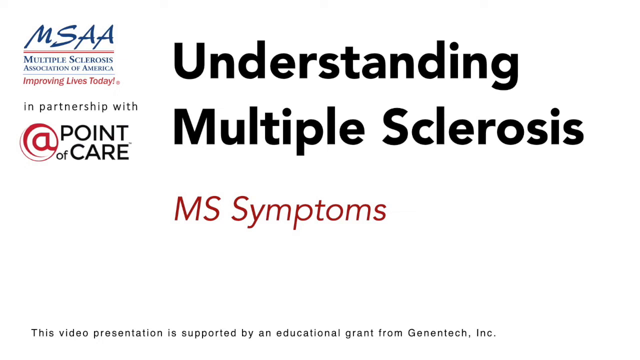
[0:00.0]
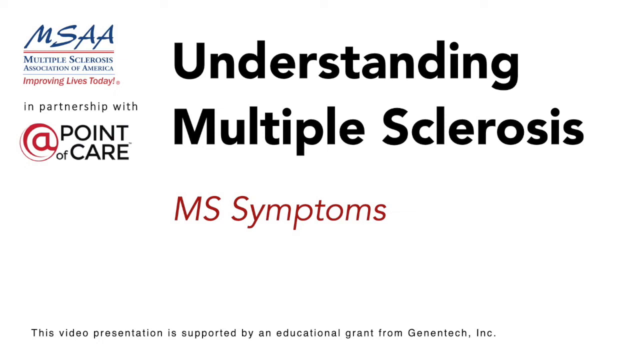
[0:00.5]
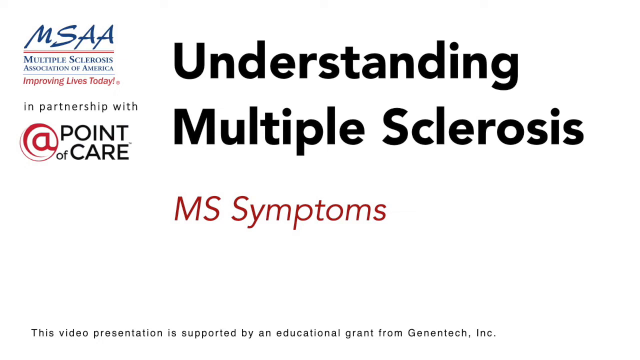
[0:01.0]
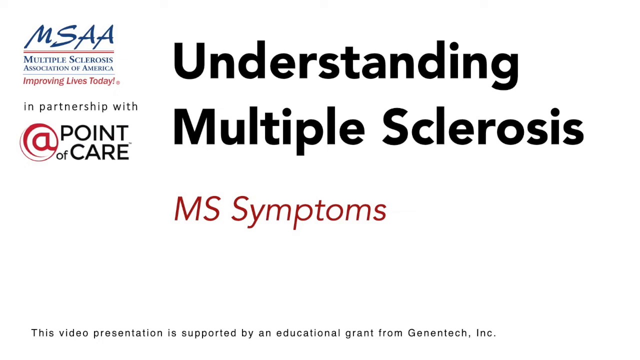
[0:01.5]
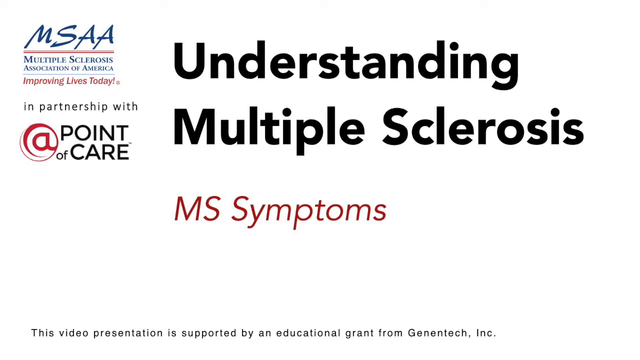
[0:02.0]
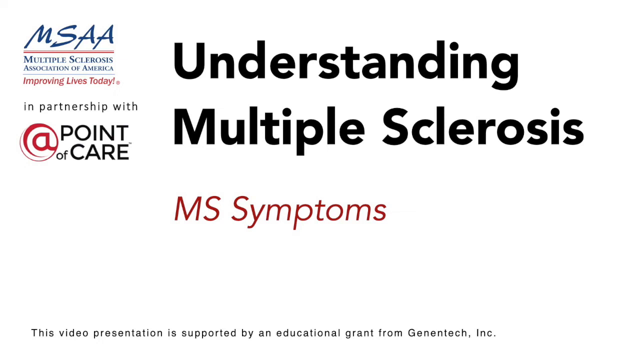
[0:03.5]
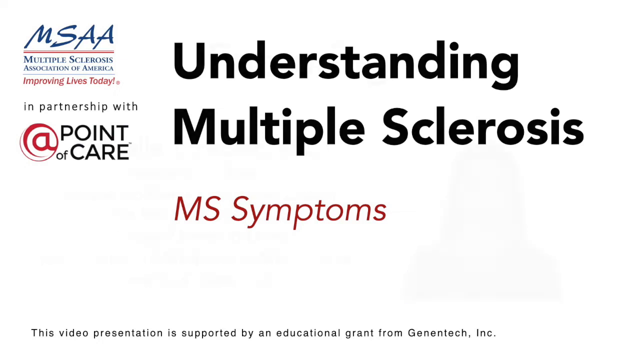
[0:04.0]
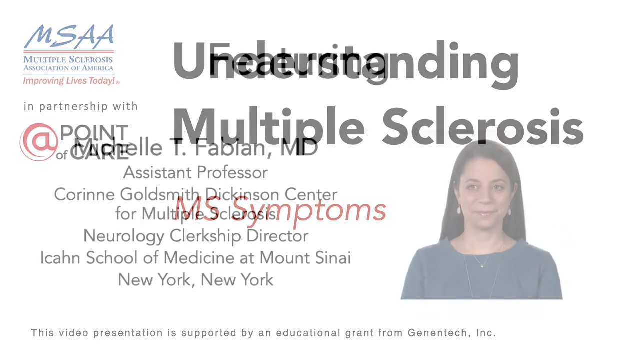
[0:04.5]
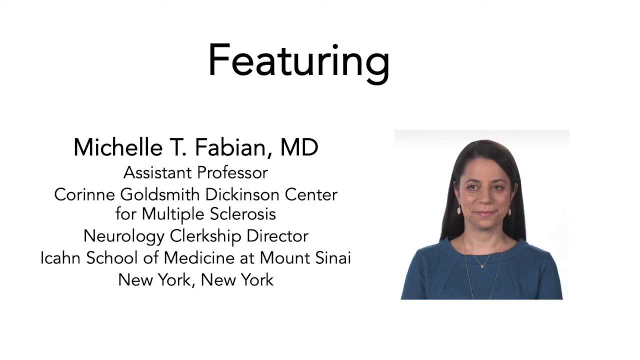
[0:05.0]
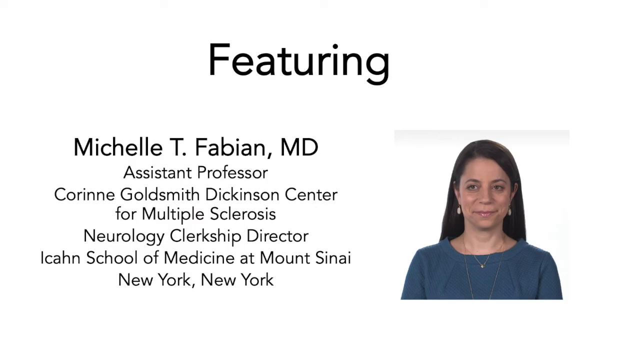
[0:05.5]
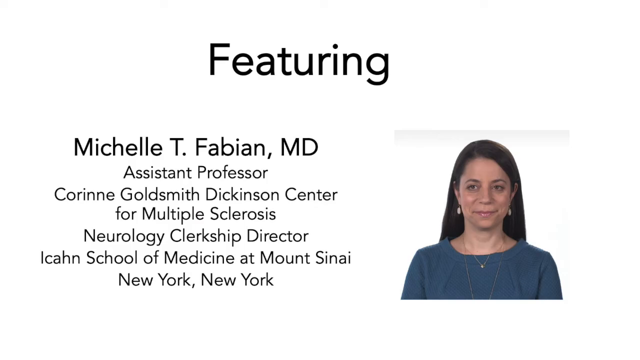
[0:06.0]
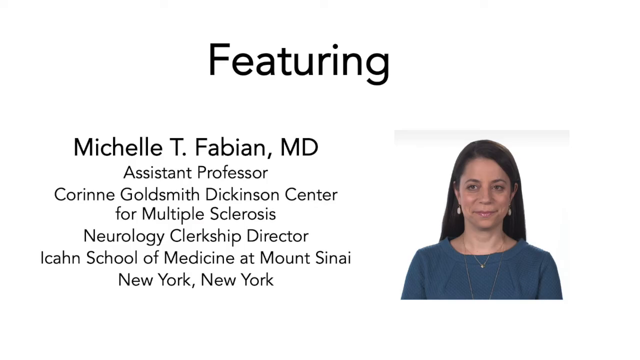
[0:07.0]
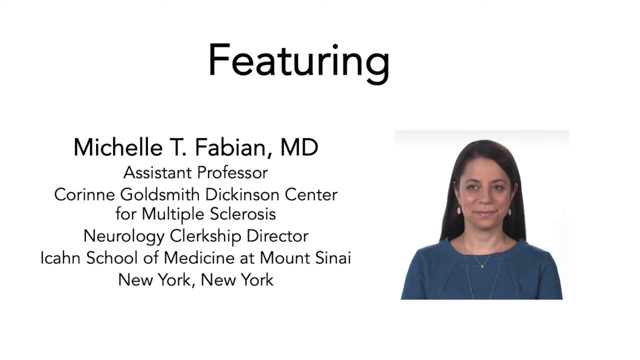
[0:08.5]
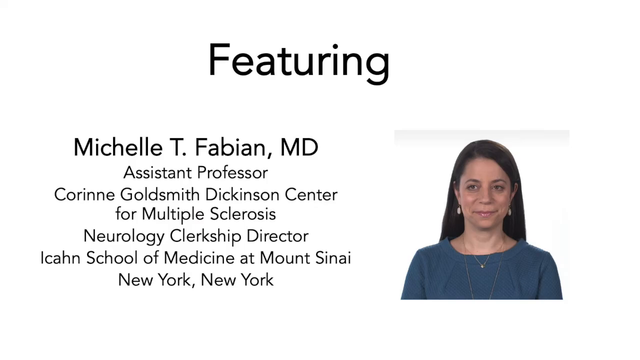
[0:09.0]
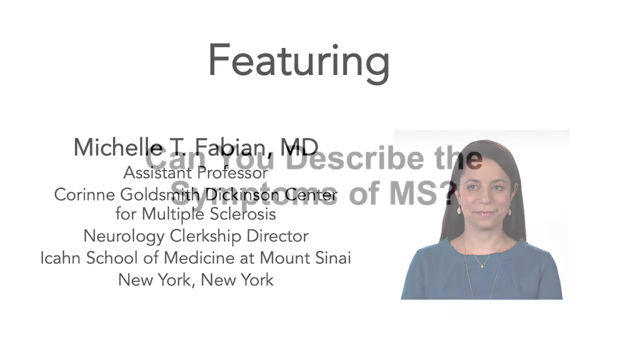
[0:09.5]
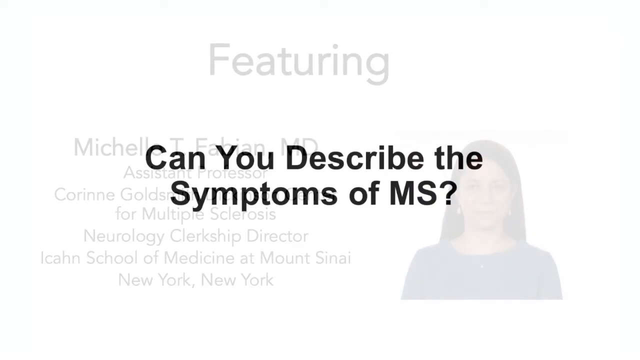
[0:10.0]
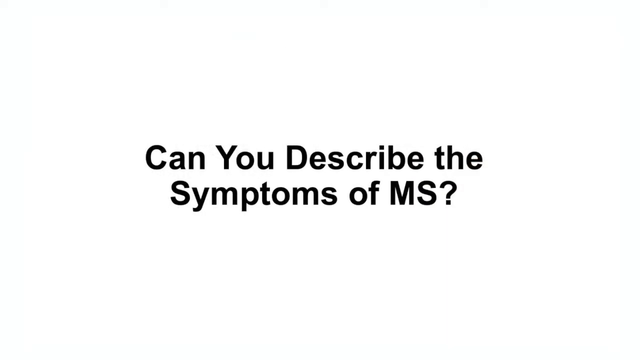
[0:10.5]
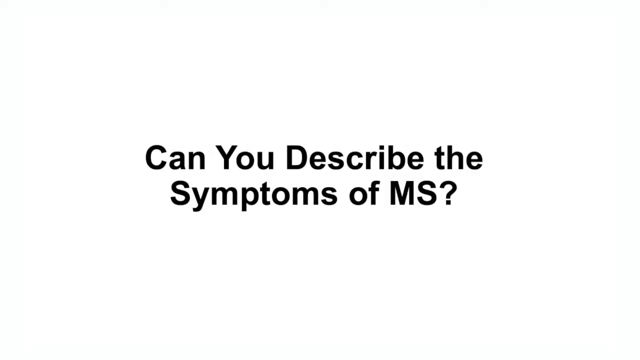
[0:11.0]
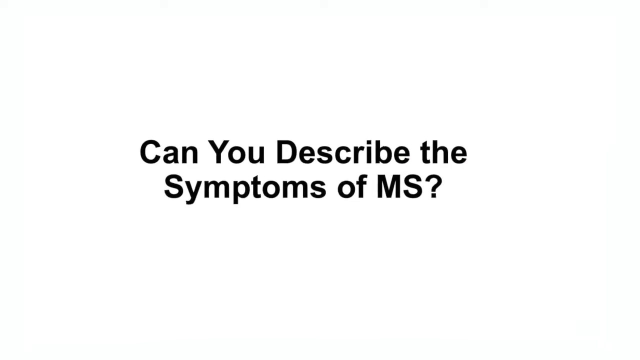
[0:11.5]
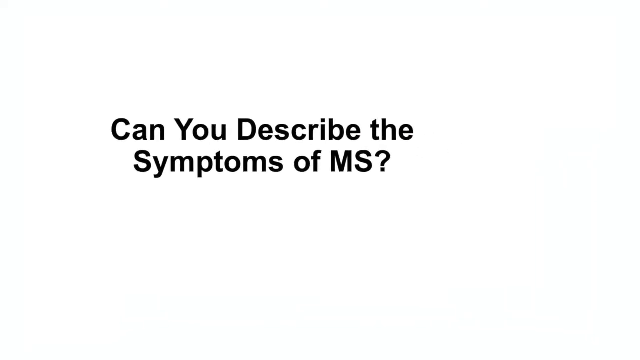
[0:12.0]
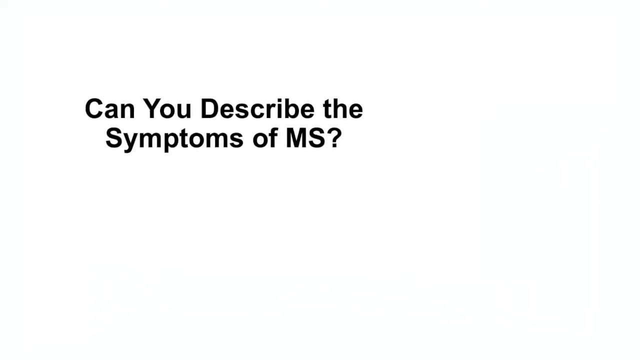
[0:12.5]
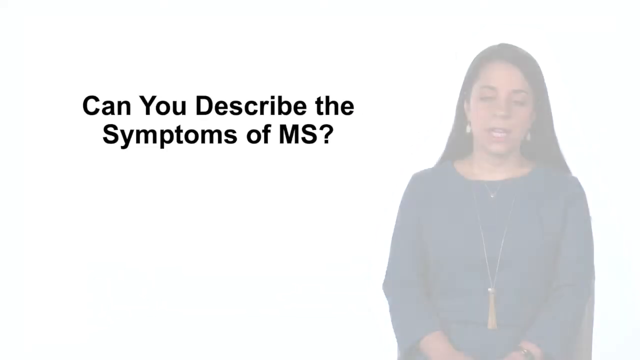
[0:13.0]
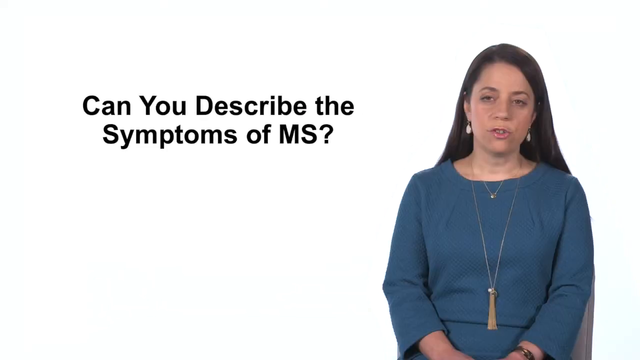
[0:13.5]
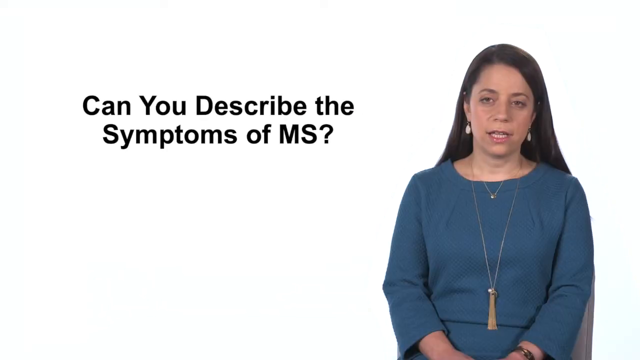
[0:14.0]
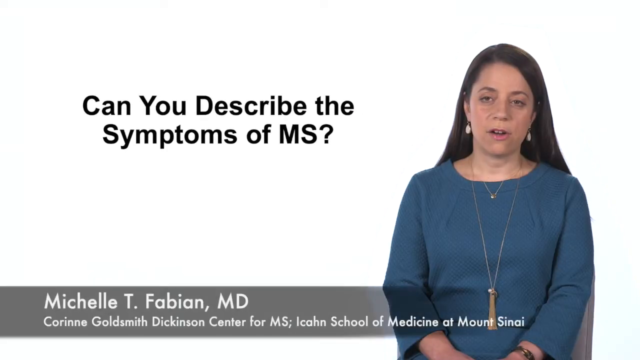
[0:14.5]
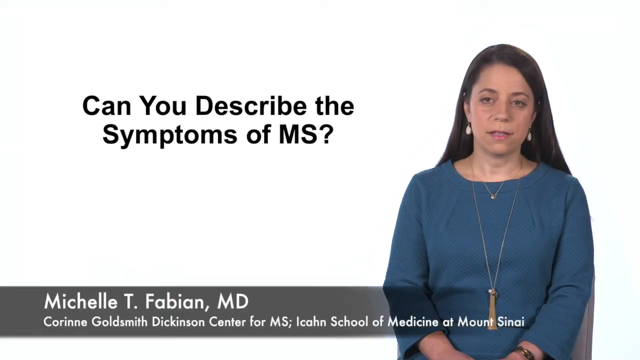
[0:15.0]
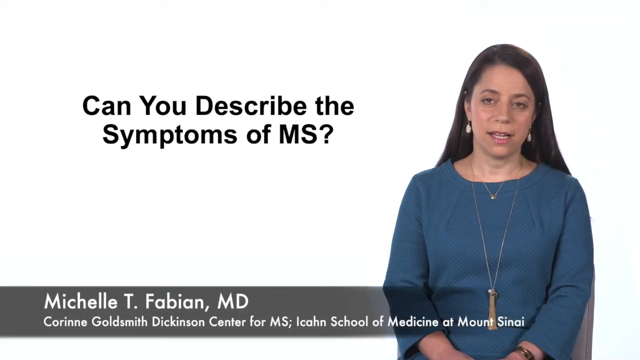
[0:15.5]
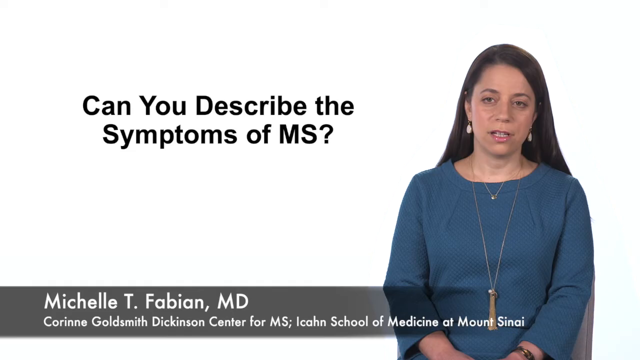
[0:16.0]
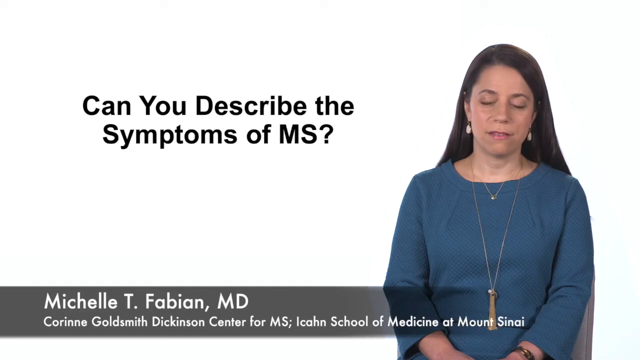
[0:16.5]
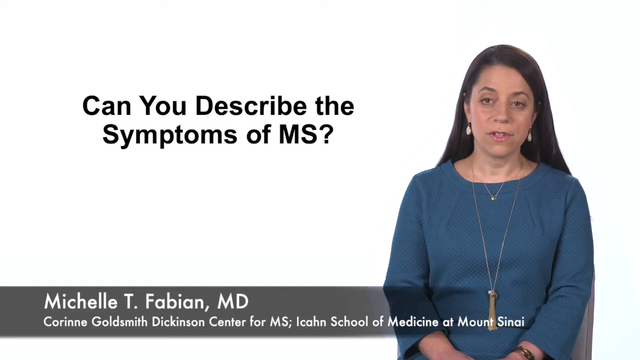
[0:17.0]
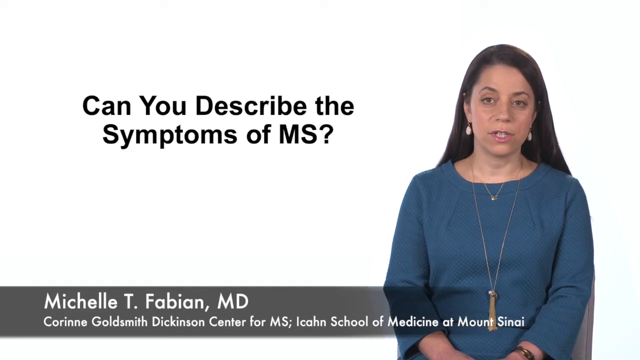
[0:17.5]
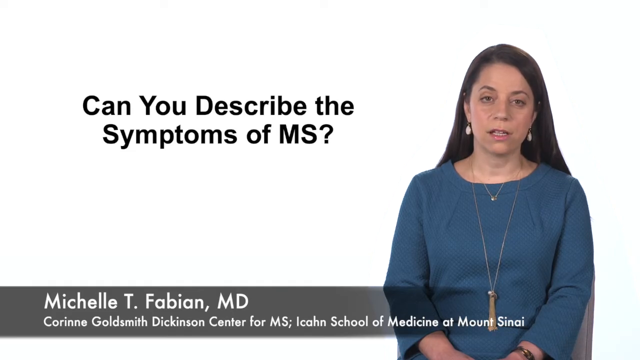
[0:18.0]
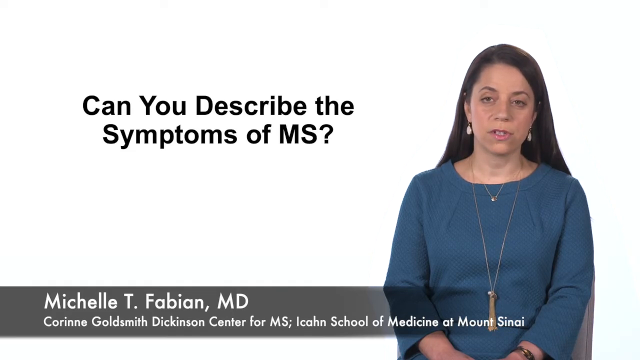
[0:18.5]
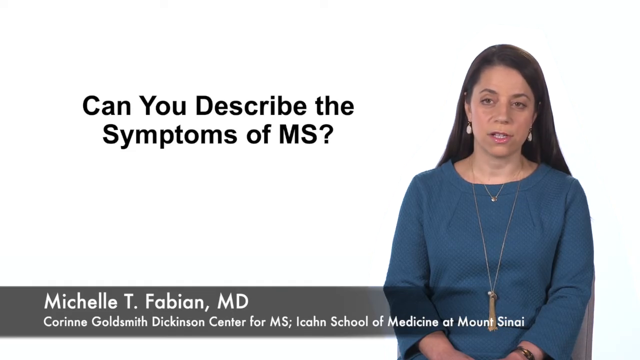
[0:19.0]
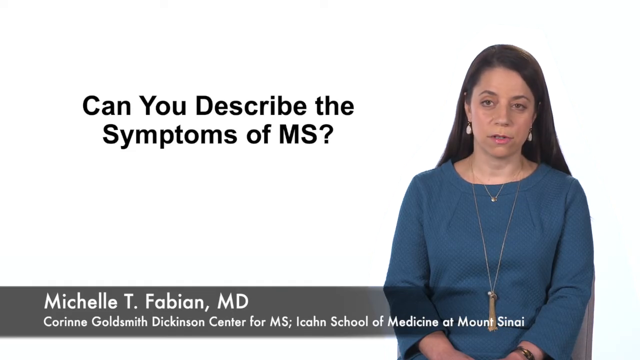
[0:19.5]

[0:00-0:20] Three different screens appear. The first shows "Understanding Multiple Sclerosis" in bold black letters at the center top of the screen. Below it, in red italics, is "MS Symptoms". At the top left is "MSAA, the Multiple Sclerosis Association of America", with the red tagline "Improving Lives Today" beneath it, and below that "In Partnership with @ A Point of Care". The screen then changes to the credits, which read in black: "Featuring Michelle T. Fabian, MD, Assistant Professor, Corinne Goldsmith Dickinson Center for Multiple Sclerosis, Neurology Clerkship Director, Icahn School of Medicine at Mount Sinai, New York, New York." In the right-hand corner is a headshot of the woman, who has brown skin and long dark hair and wears a blue shirt and a necklace; she smiles at the camera. The third screen shows "Can You Describe the Symptoms of MS?" in black print against white, which drifts to the top left of the screen. On the right-hand side is "Michelle Fabian, MD"; she is an assistant professor at the Corinne Goldsmith Dickinson Center for MS. She speaks to the camera.